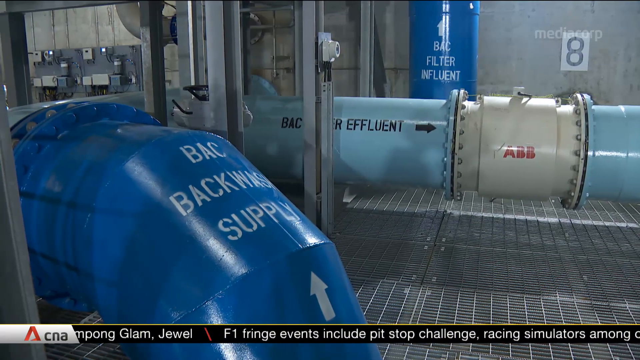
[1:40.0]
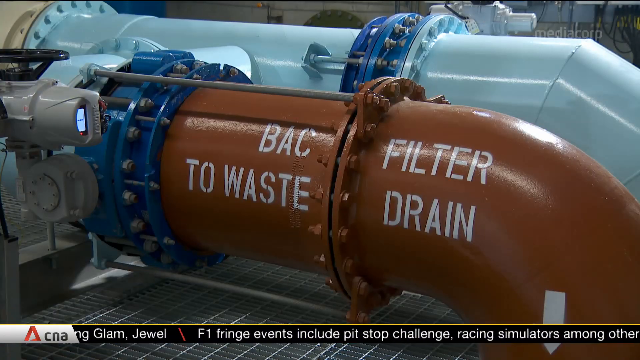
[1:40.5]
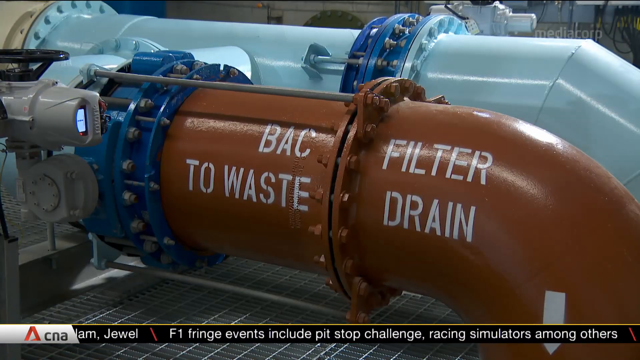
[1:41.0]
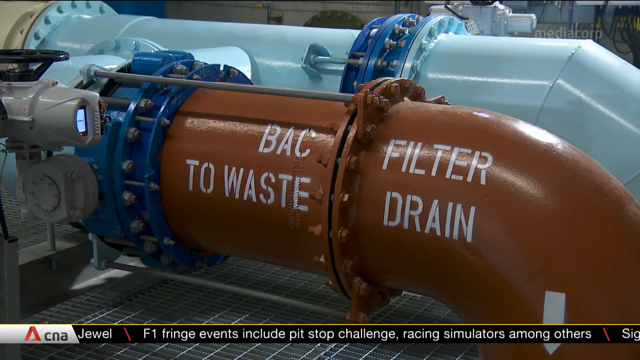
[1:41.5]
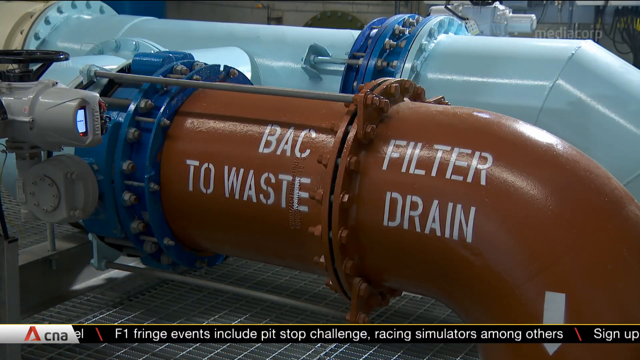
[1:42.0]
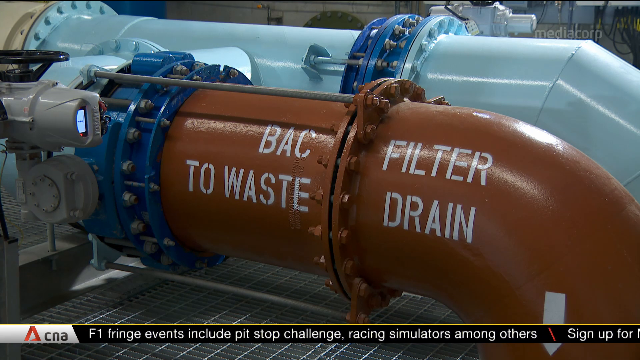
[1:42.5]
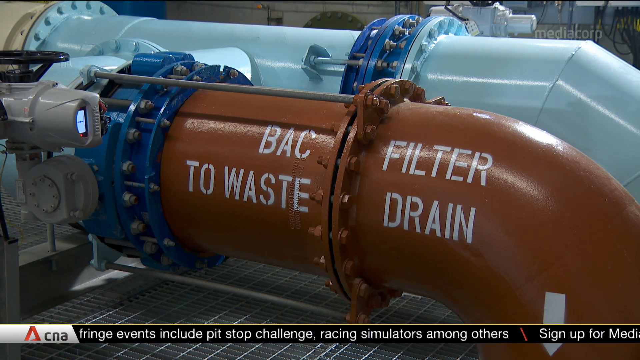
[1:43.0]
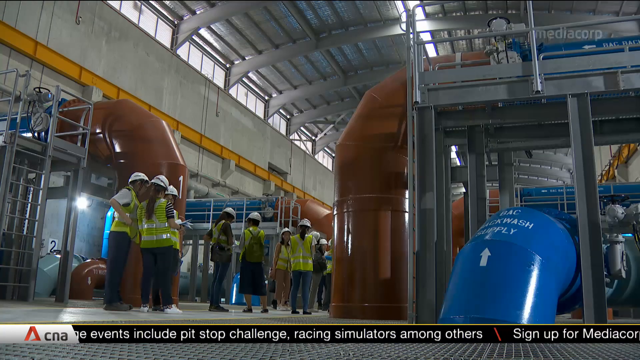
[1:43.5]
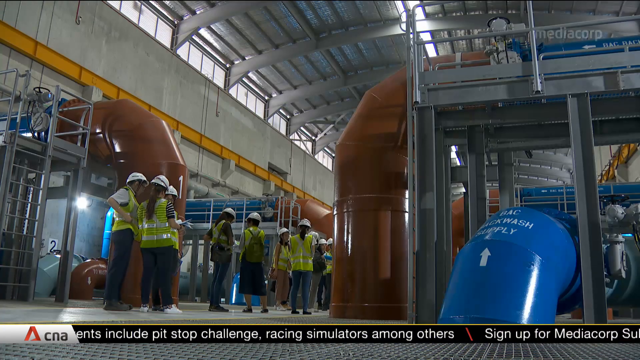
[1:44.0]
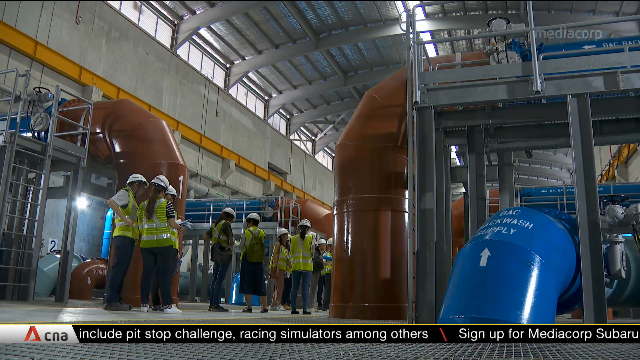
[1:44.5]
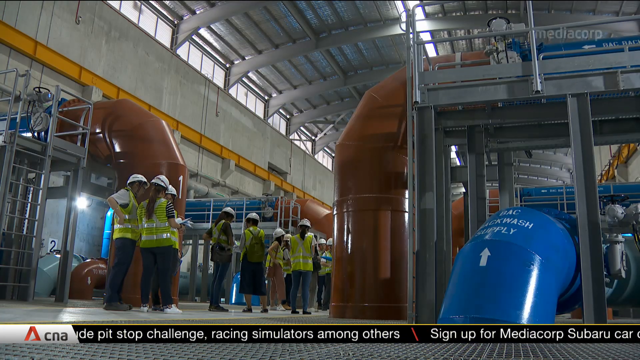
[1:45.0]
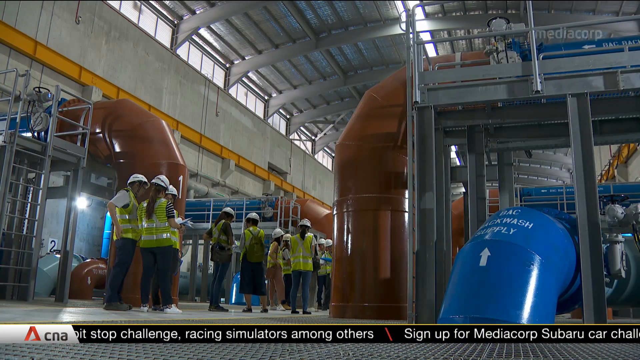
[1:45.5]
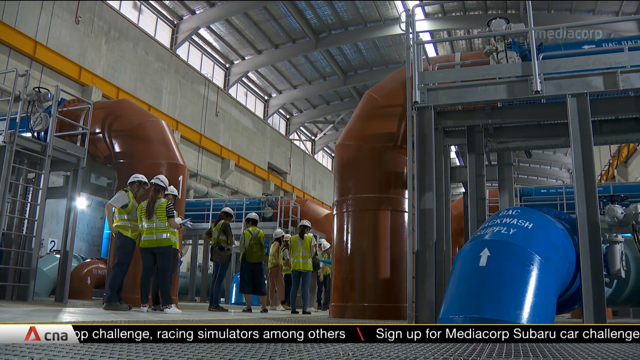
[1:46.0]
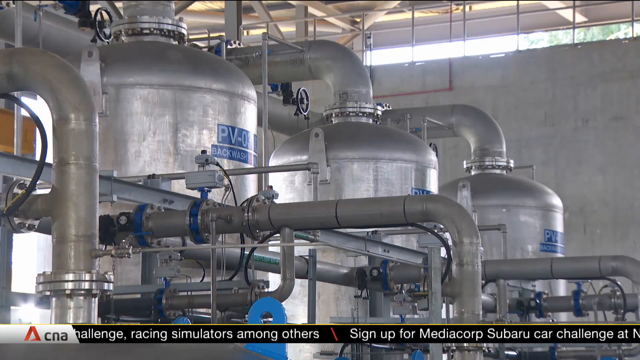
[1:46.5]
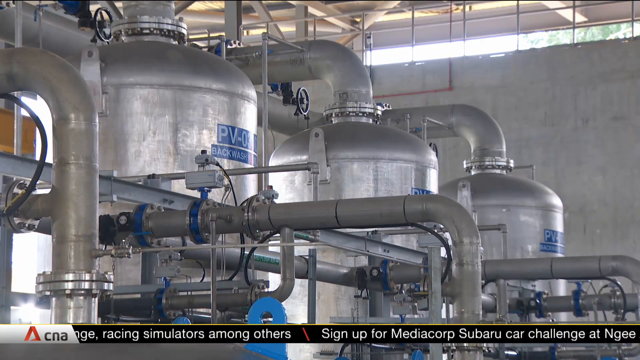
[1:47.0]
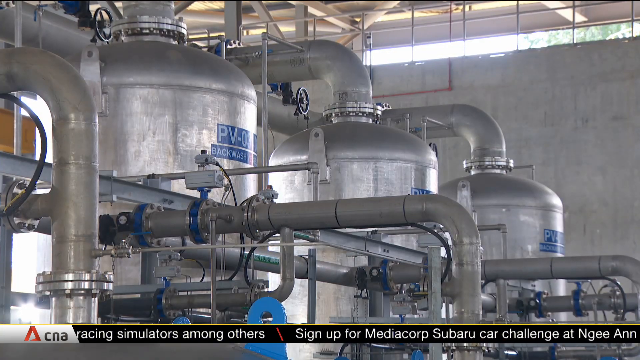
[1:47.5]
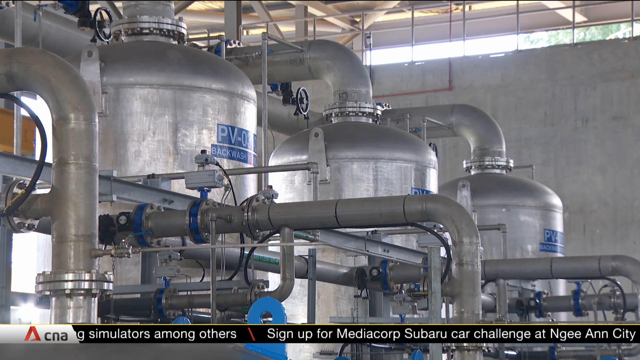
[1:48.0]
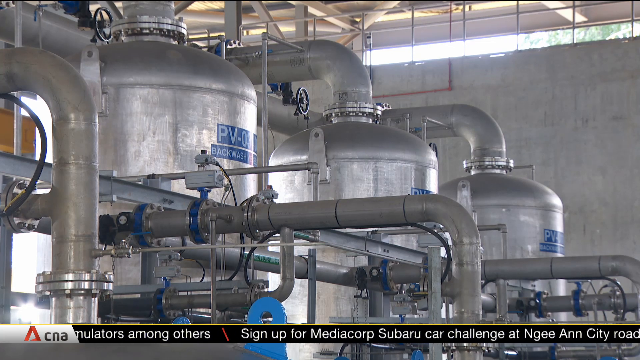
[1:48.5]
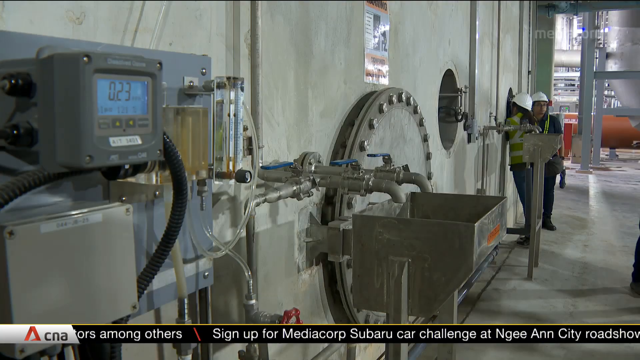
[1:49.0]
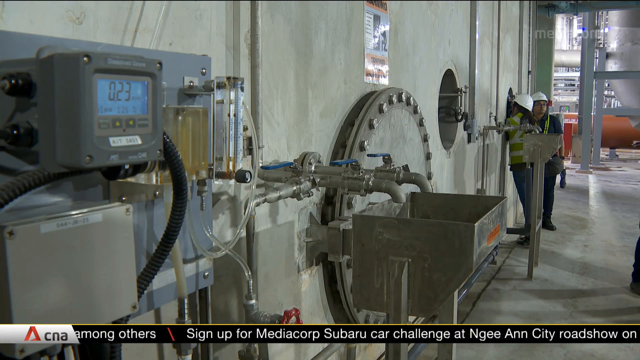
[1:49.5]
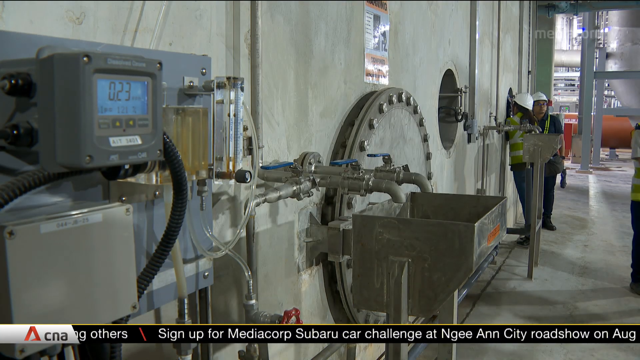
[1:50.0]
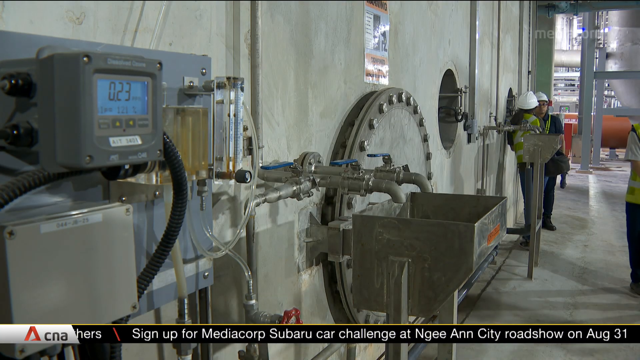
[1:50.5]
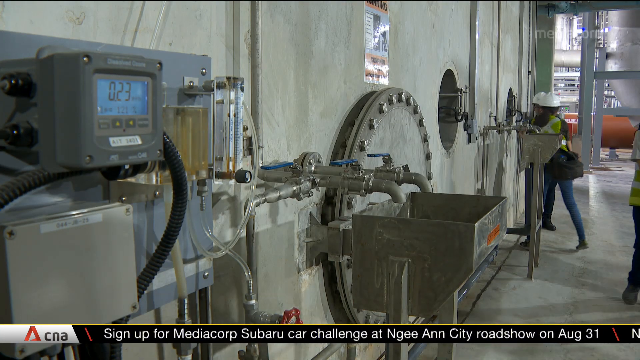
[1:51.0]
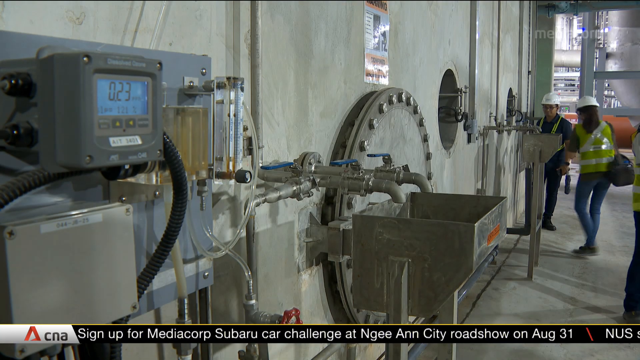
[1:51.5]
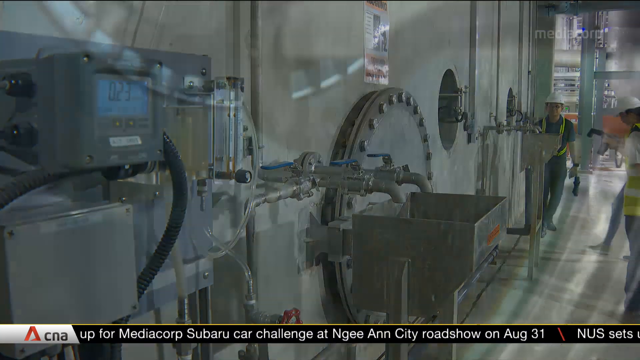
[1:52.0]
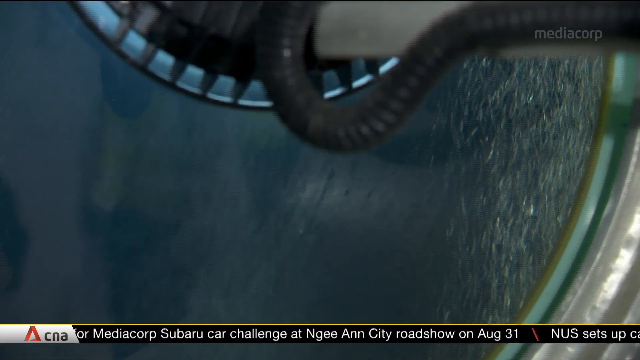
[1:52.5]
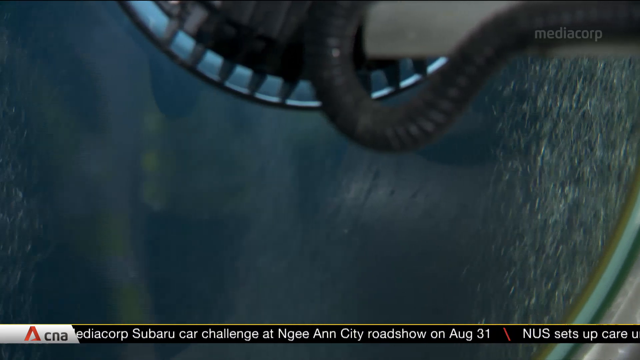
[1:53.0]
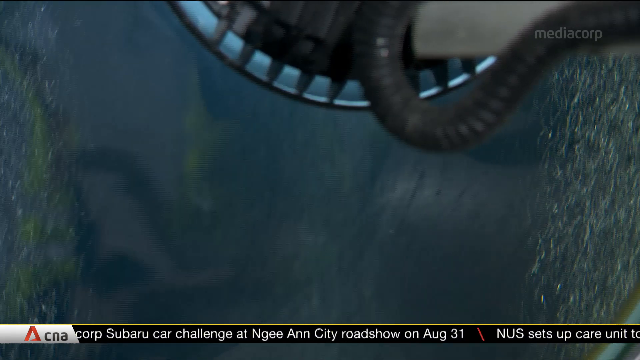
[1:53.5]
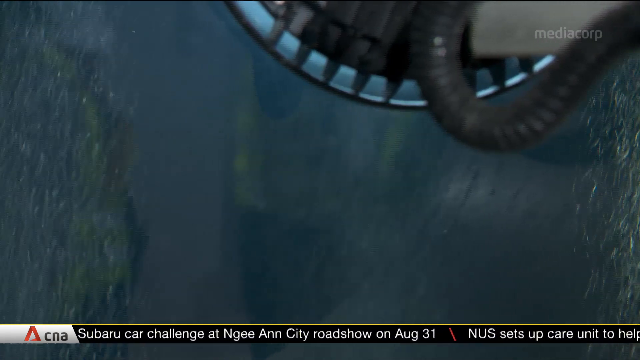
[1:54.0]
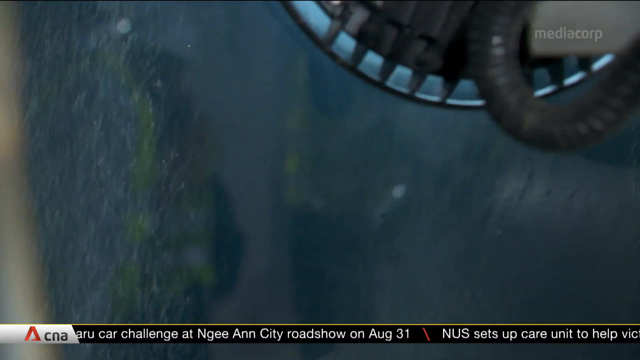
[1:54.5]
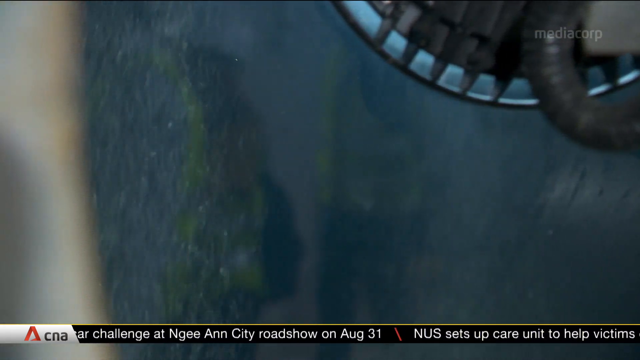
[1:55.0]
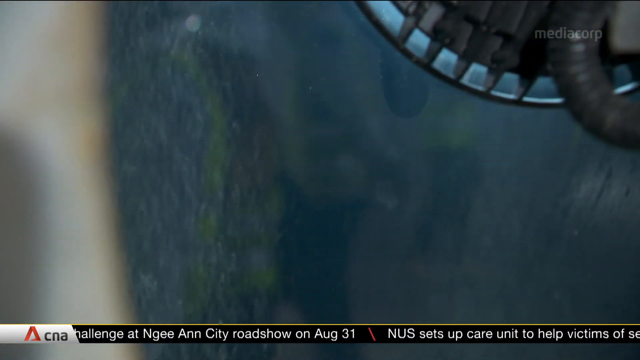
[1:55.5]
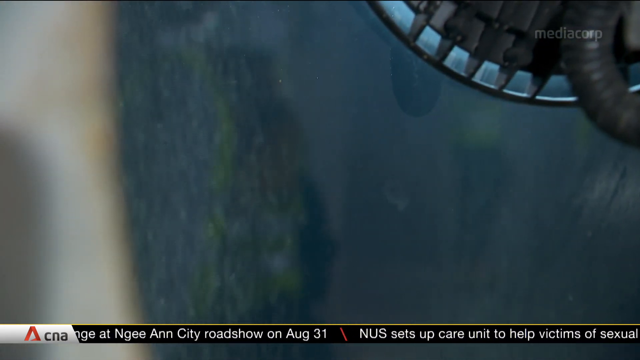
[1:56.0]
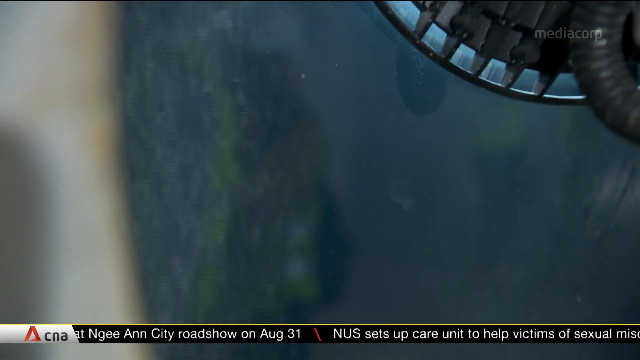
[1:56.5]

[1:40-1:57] A room in the factory has a metal-grated floor and a large water tube showing some sort of effluent. A pale blue pipe is bolted onto a short creamish pipe with "ABB" in red letters on it, which in turn is bolted onto another pale blue pipe that disappears to the right of the screen. A dark blue pipe runs vertically behind the first pale blue pipe, and in the left foreground is a corner pipe with writing on it. The number "8" is on the concrete wall at the back. Another series of pipes follows: two parallel pipes run across the screen and bend toward the right of the screen; the one at the back is pale blue, and the one at the front is red and reads "BAC filter to waste drain". Another view of the factory then shows workers standing around, some enormous red pipes running vertically, and a blue corner pipe toward the right of the screen.